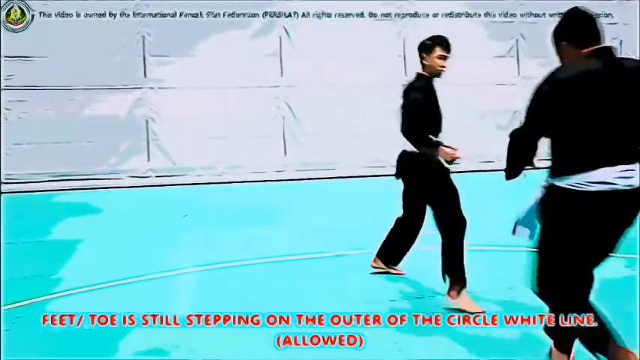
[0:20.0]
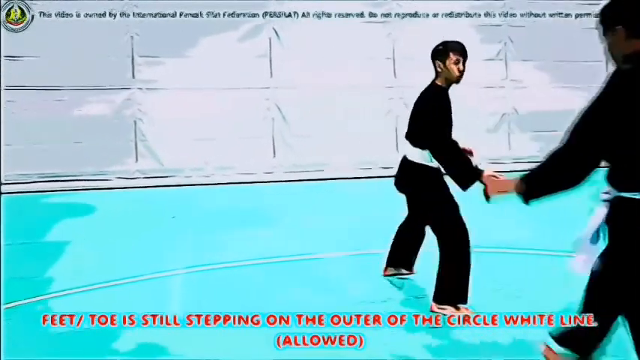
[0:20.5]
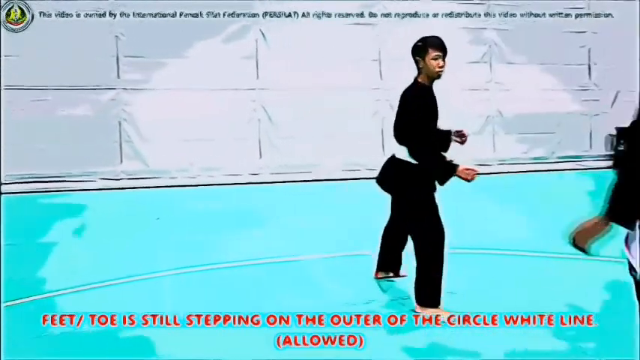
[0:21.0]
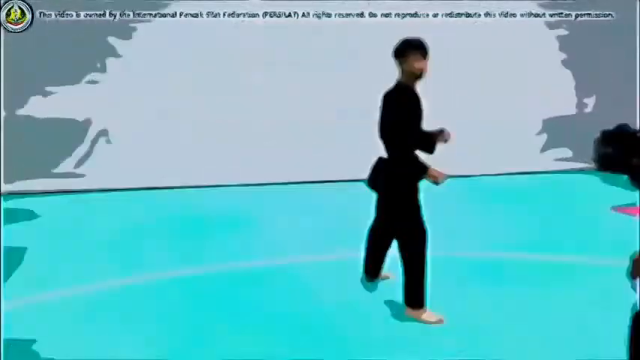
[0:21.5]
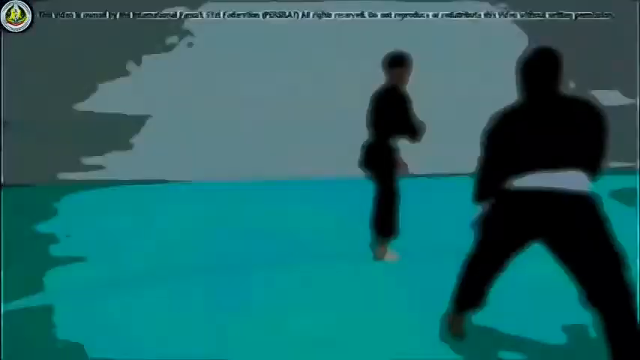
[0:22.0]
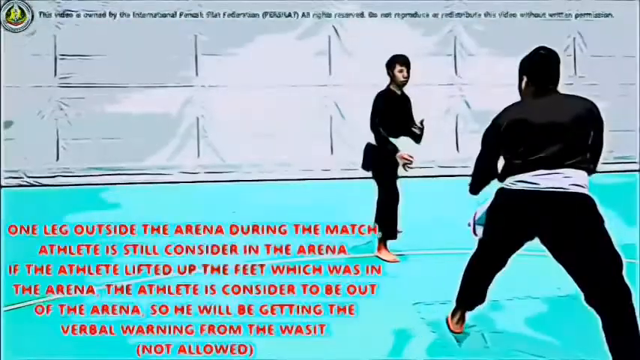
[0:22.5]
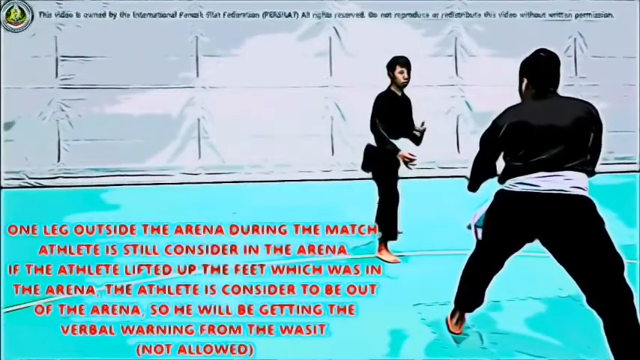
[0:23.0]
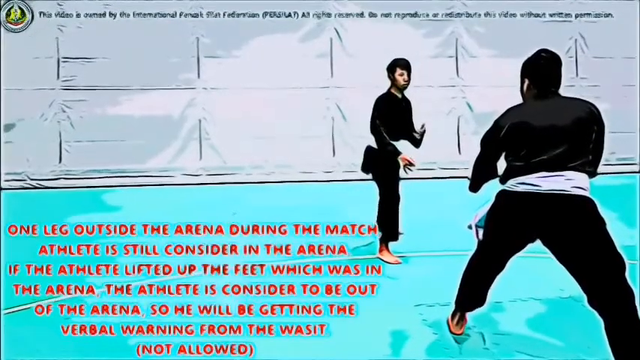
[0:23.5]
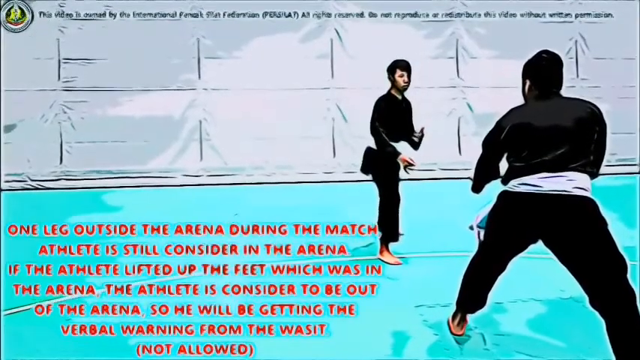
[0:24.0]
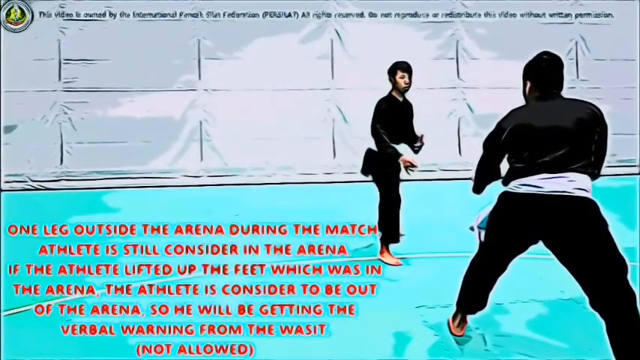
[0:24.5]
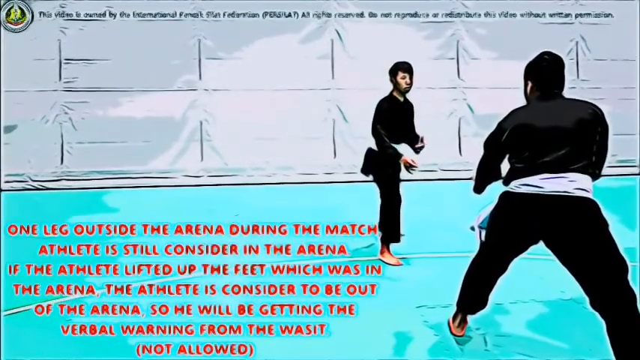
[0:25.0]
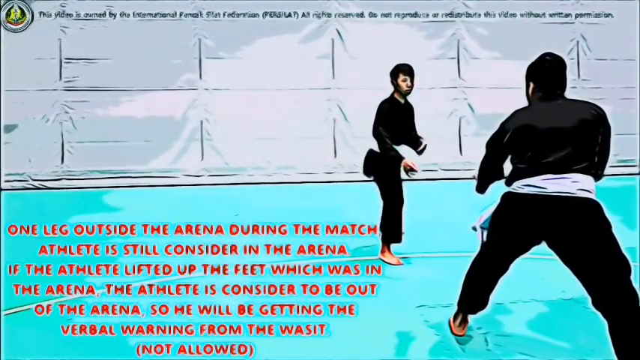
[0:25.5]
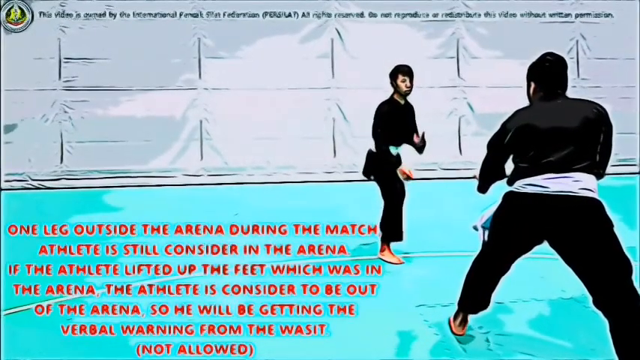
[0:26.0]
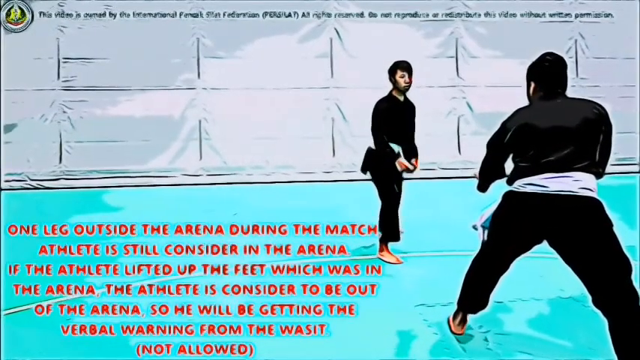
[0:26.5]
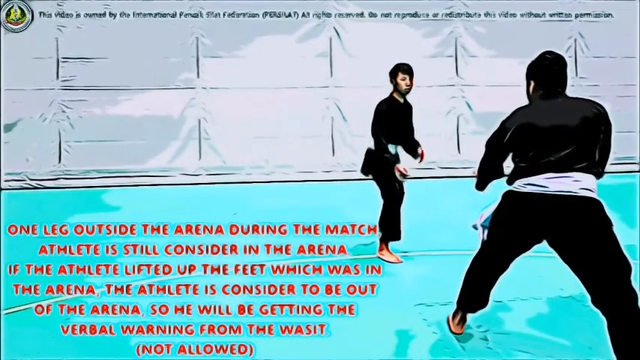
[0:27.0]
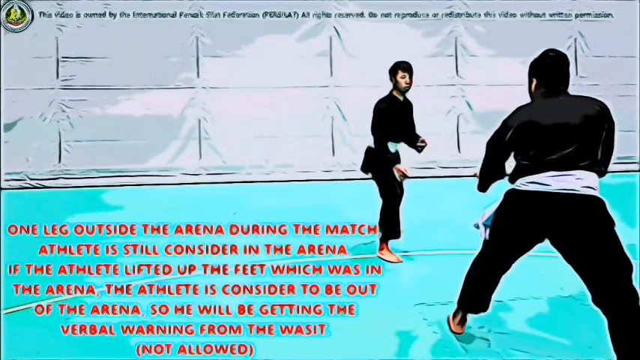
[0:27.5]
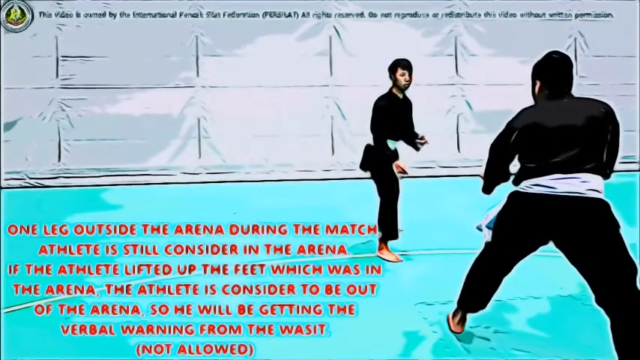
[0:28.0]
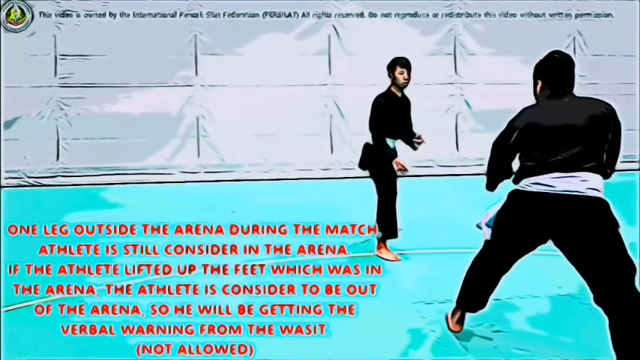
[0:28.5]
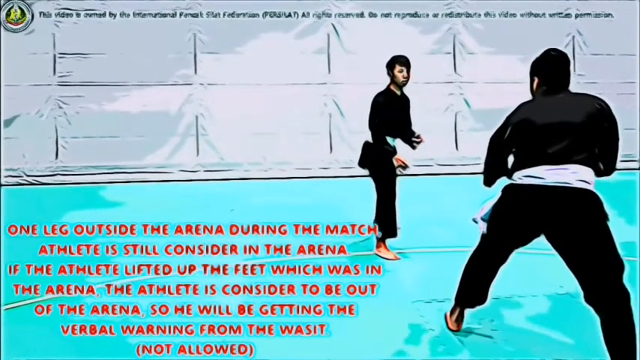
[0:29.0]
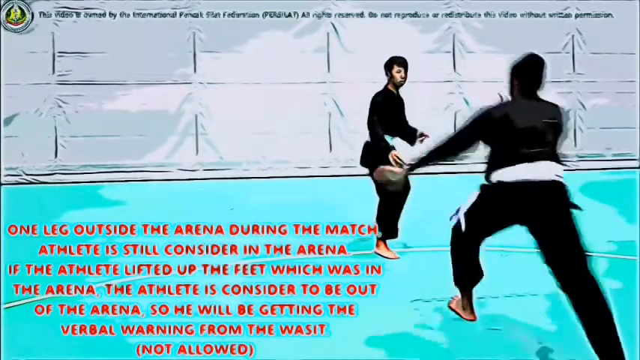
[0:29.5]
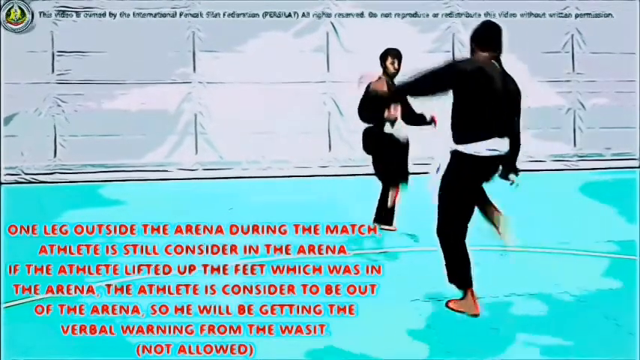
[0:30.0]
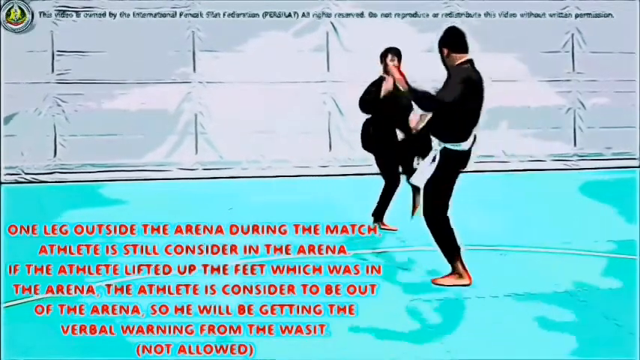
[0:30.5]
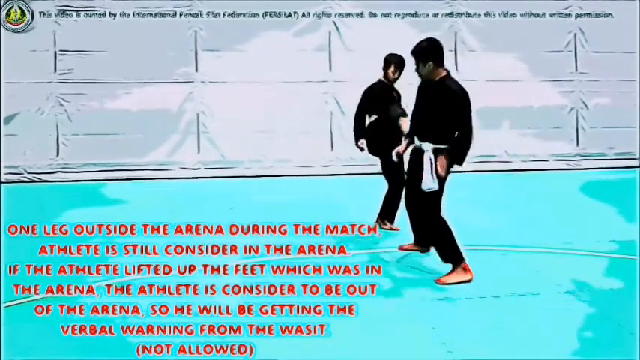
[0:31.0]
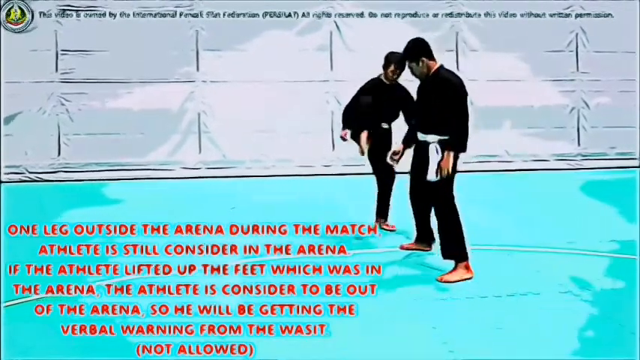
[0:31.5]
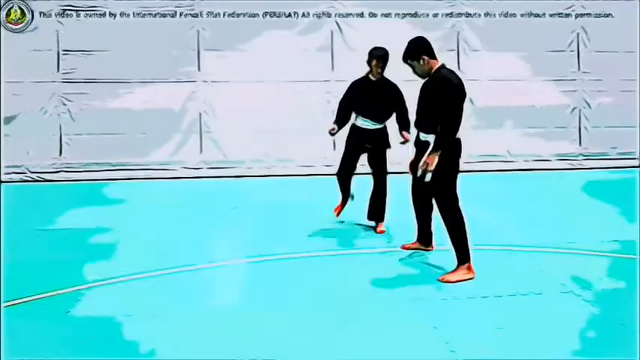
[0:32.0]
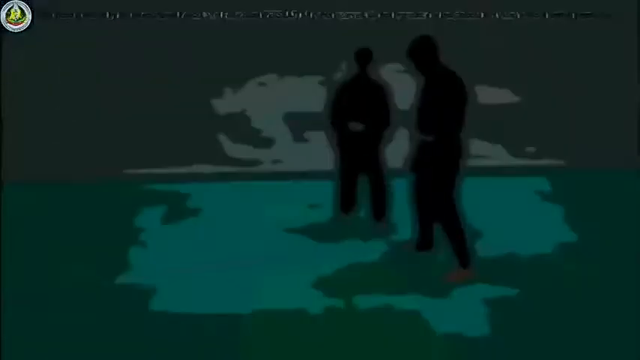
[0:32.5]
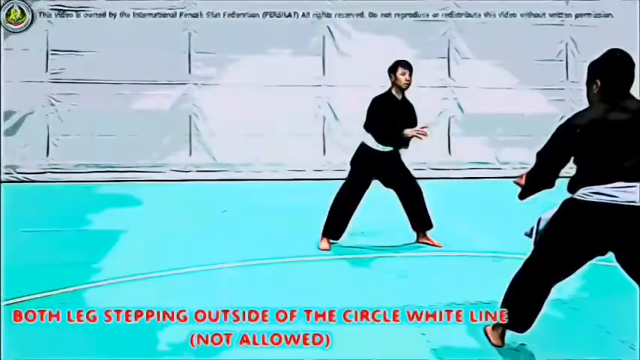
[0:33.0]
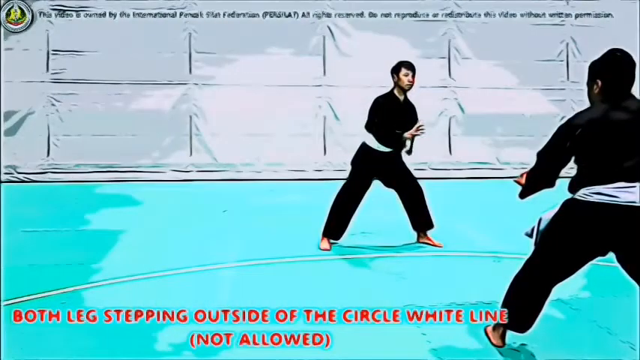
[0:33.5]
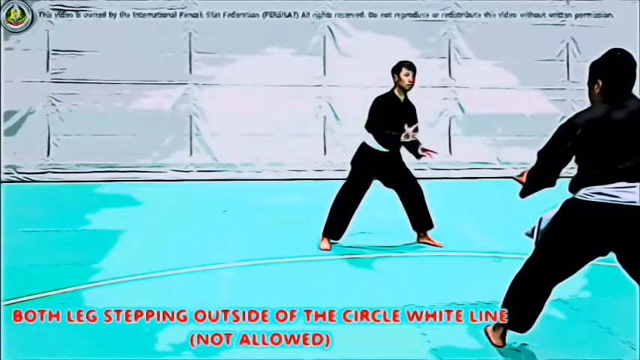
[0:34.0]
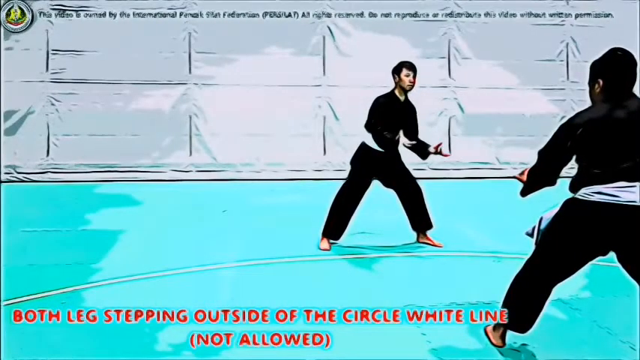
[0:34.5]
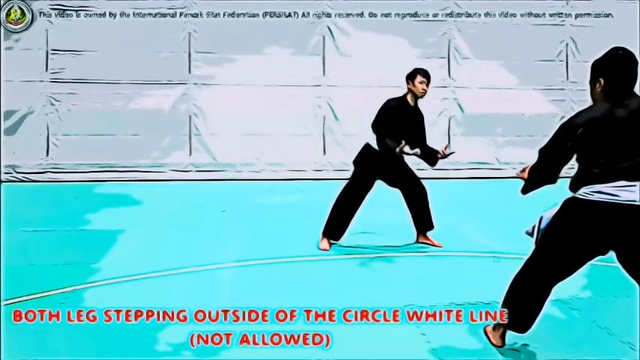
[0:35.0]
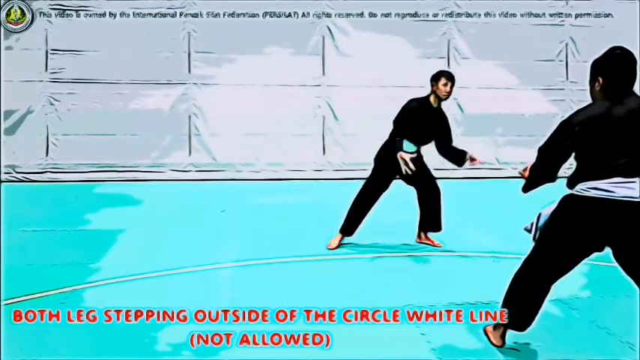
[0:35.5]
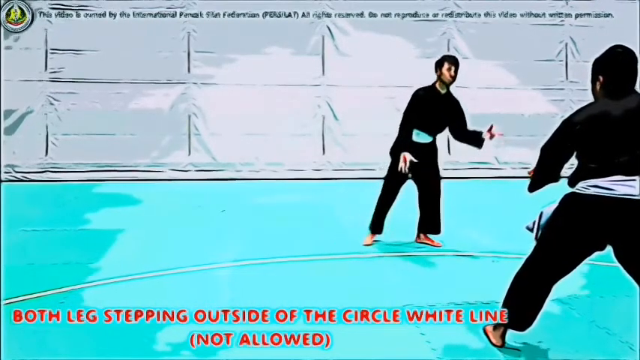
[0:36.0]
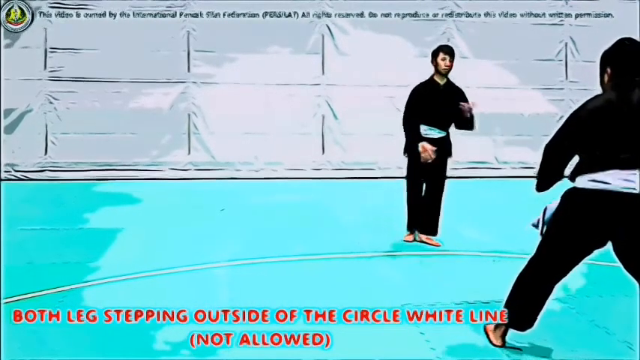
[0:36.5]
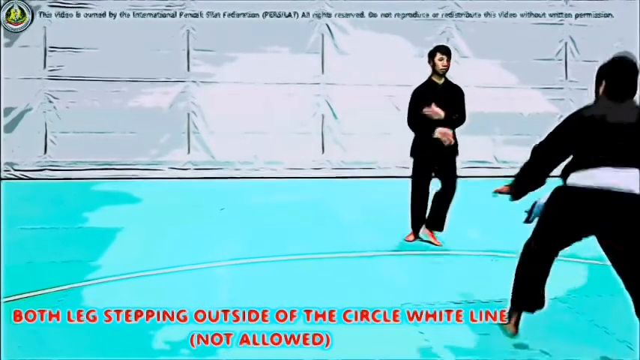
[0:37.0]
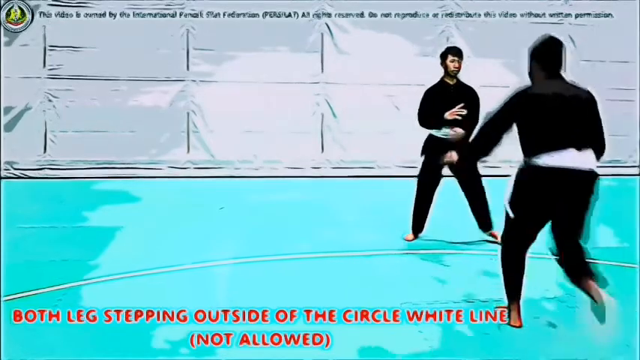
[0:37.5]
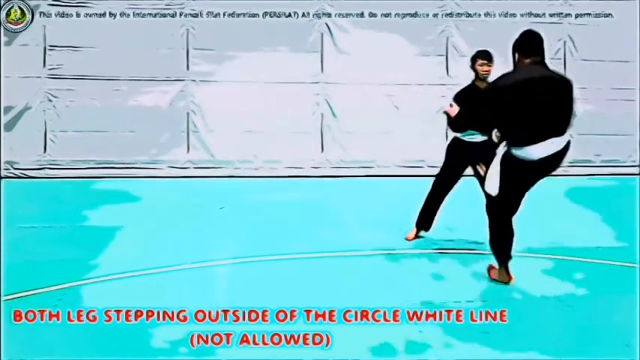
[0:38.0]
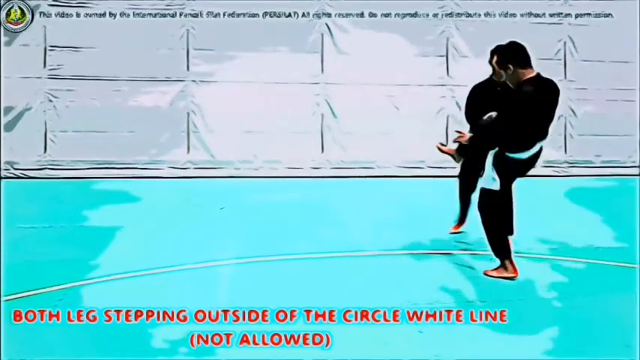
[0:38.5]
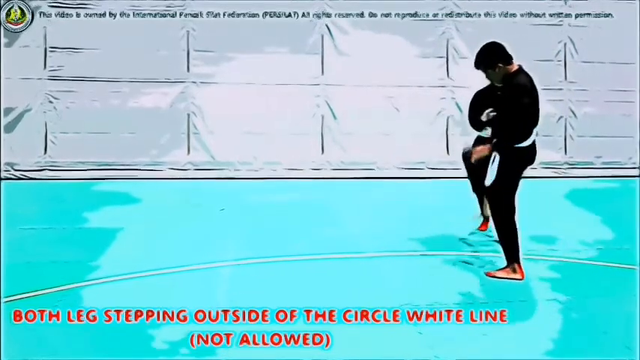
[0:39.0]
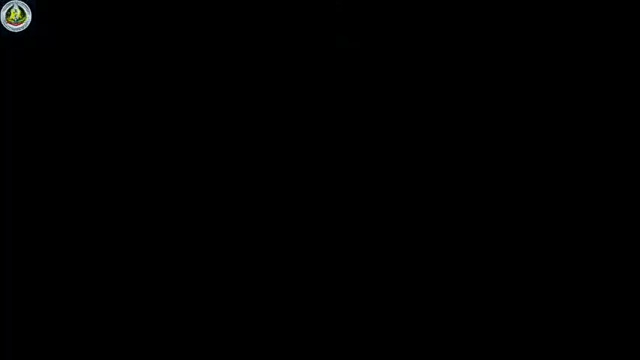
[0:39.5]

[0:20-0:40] On-screen instructions read "one leg outside the arena during the match, athlete is still considered in the arena", "if the athlete lifted up the feet, which was in the arena, the athlete is considered to be out of the arena", and "both legs stepping outside of the circle, white line not allowed".